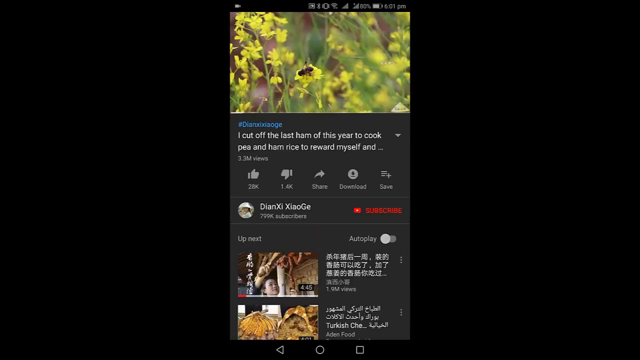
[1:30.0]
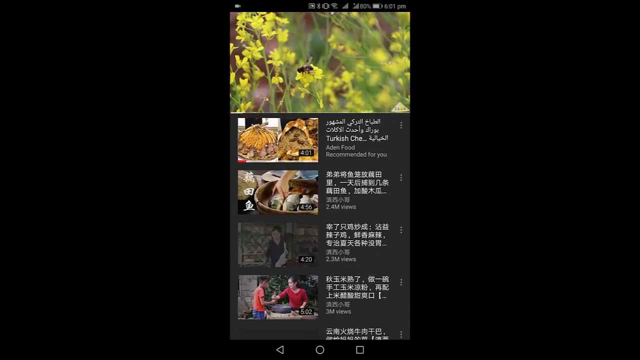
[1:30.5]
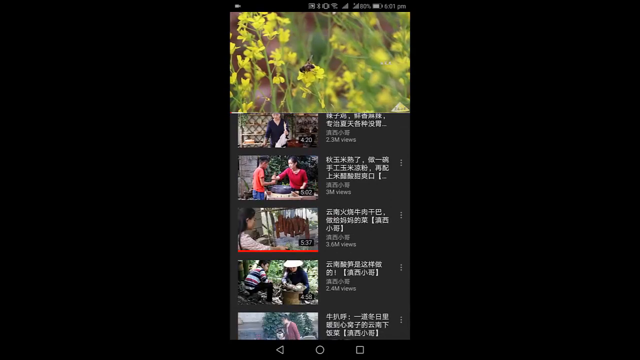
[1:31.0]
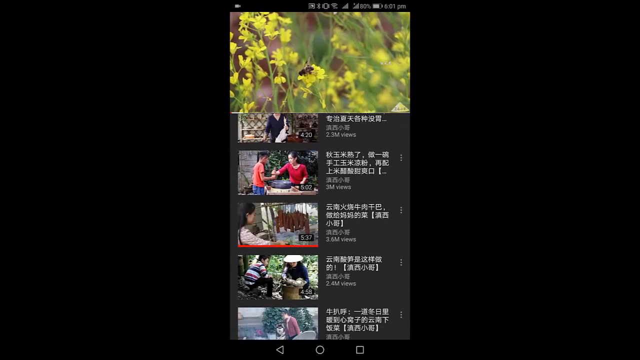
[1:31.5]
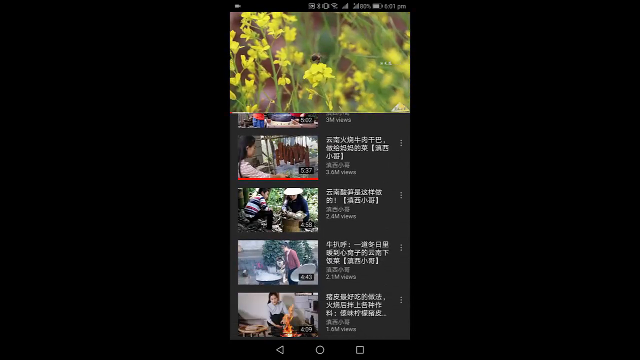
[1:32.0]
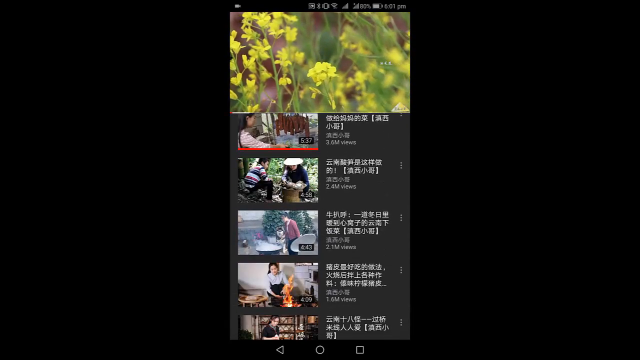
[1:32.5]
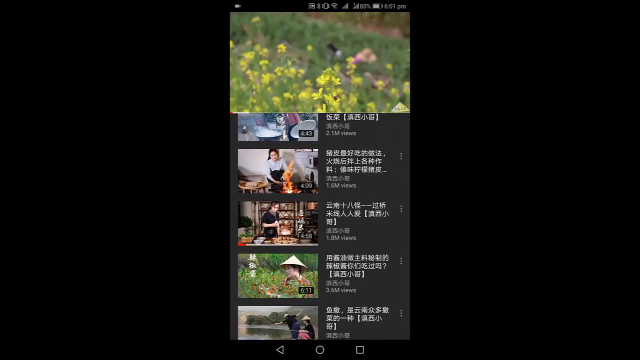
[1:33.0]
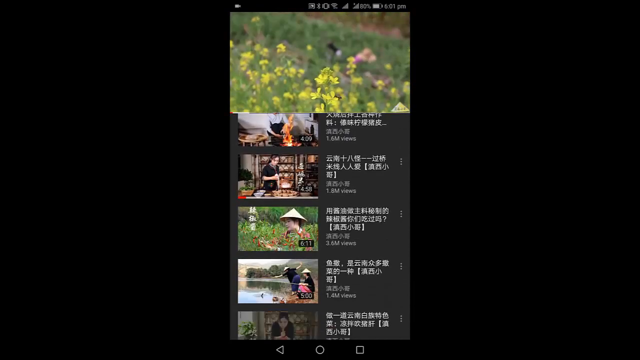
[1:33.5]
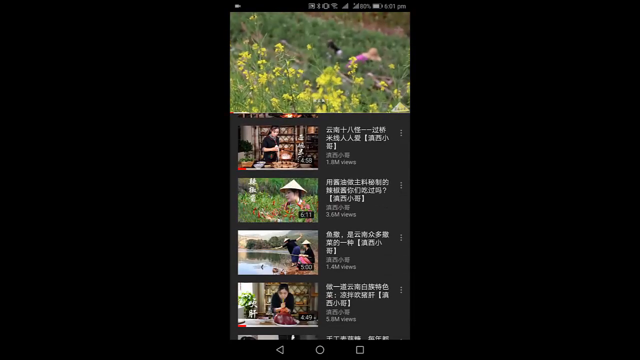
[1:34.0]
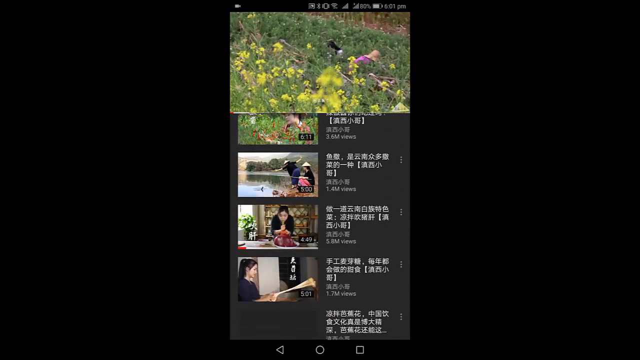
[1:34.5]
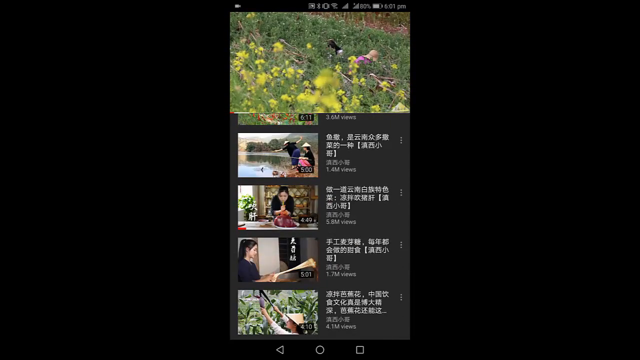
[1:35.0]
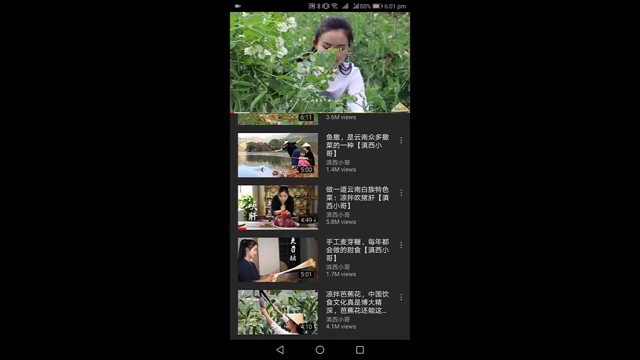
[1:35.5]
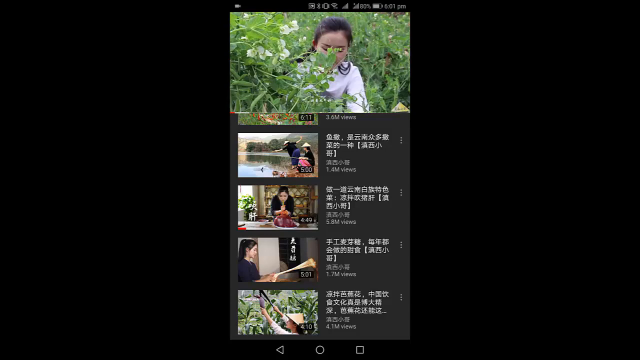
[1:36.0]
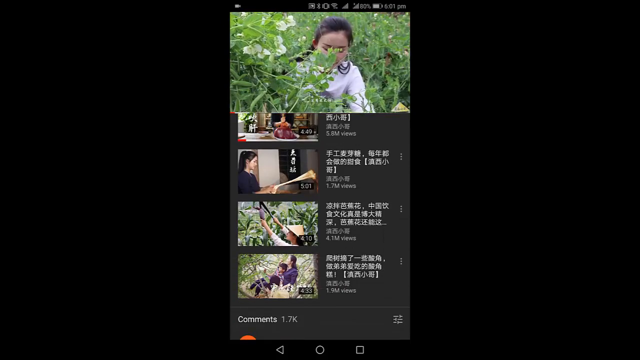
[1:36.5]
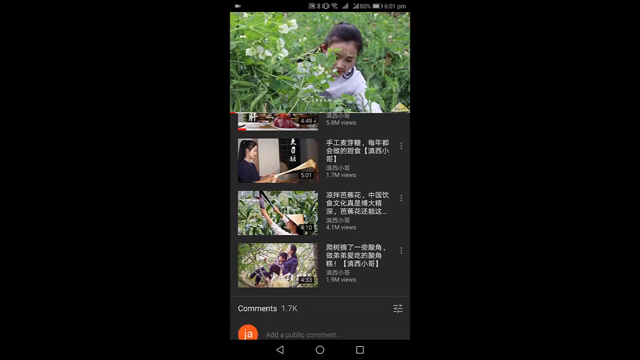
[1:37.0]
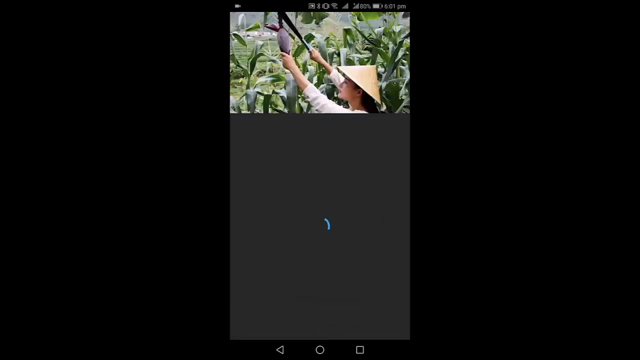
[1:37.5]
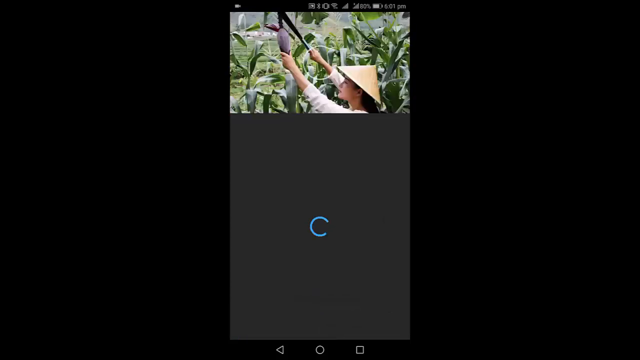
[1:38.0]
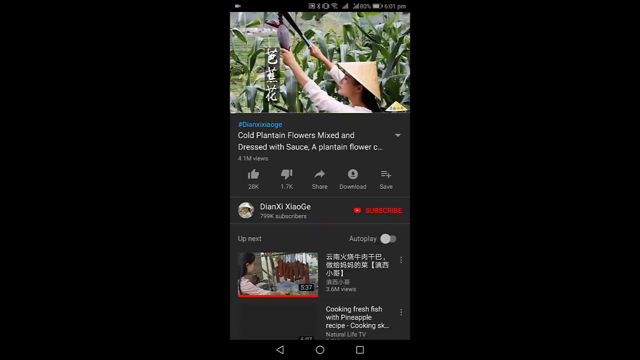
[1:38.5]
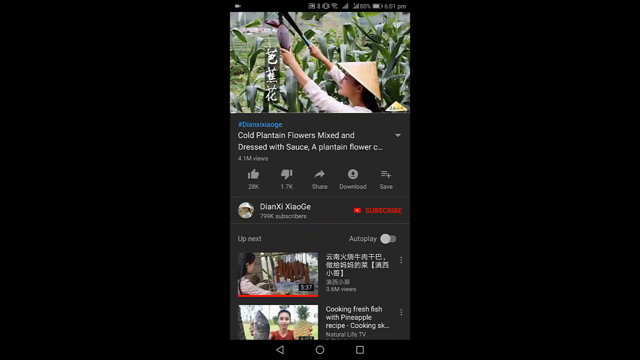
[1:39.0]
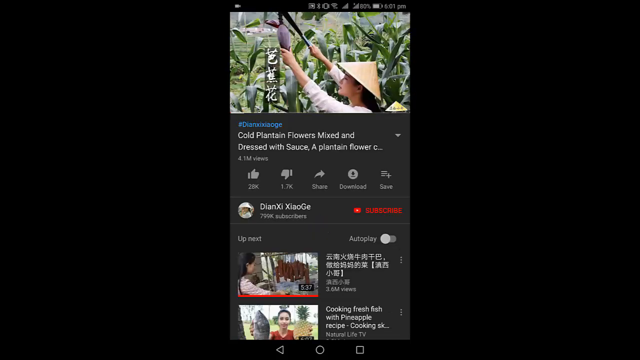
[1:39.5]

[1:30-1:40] The YouTube app shows a video playing at the top with yellow flowers, and maybe a bee flies away. He scrolls through a list of videos whose text is all in Chinese, and in the video a young Asian woman finally appears within the flowers. That video is from "DNC Xiaogei", a channel with about 799 thousand subscribers, and is titled "cold plantain flowers mixed and dressed with sauce". The next video shown is titled "I cut off the last ham of this year to cook pea and ham rice to reward myself" and has 3.3 million views.